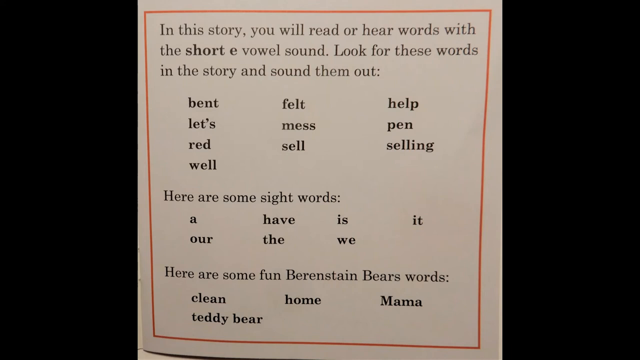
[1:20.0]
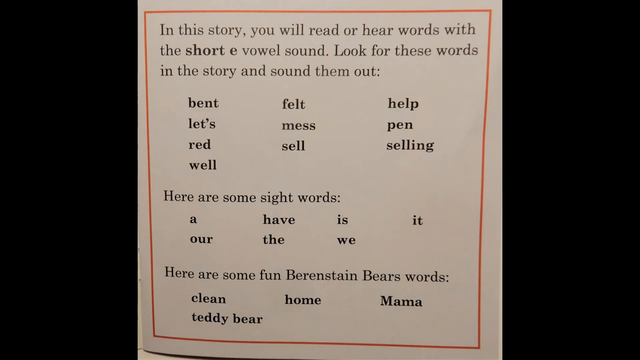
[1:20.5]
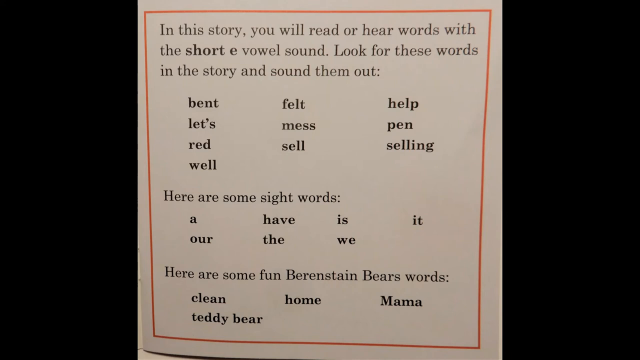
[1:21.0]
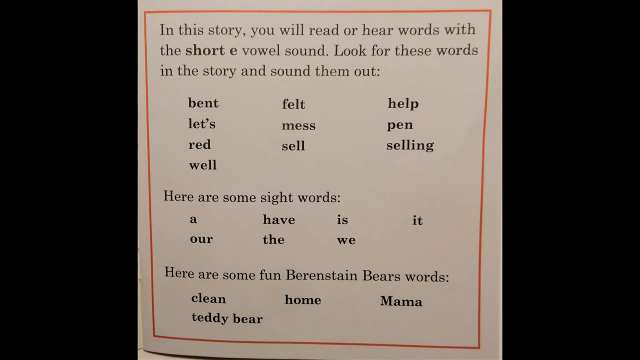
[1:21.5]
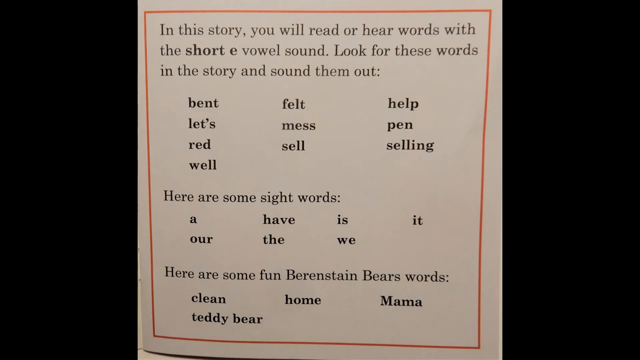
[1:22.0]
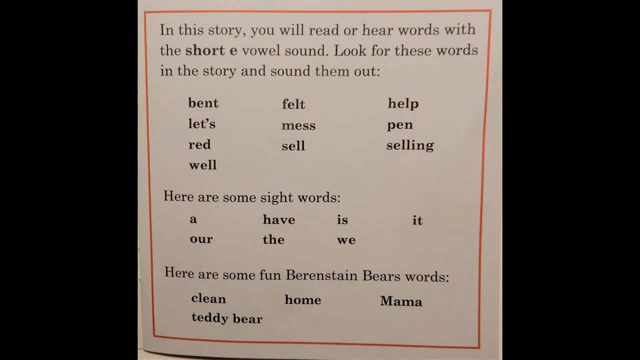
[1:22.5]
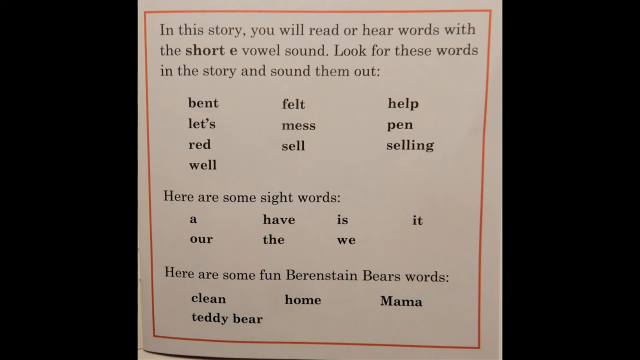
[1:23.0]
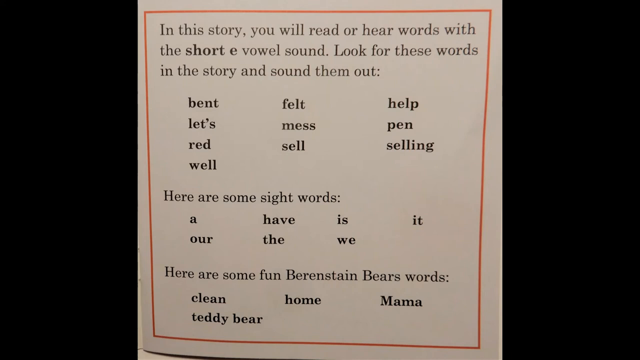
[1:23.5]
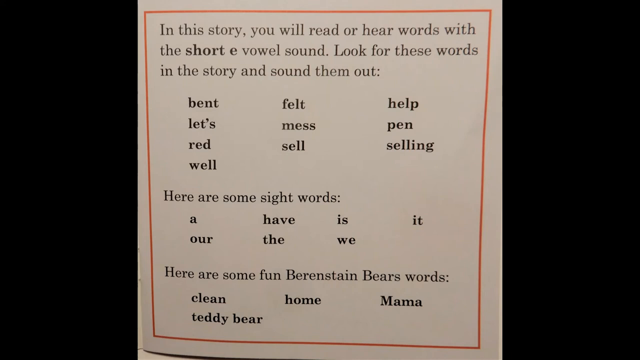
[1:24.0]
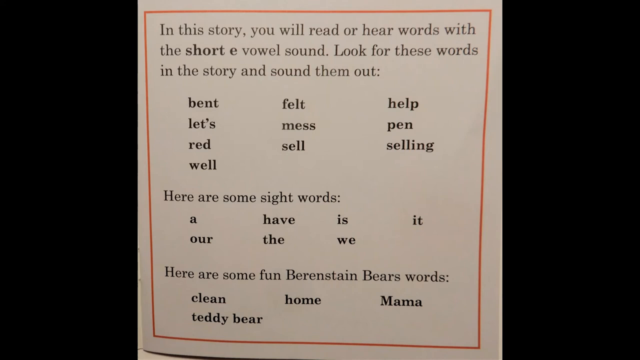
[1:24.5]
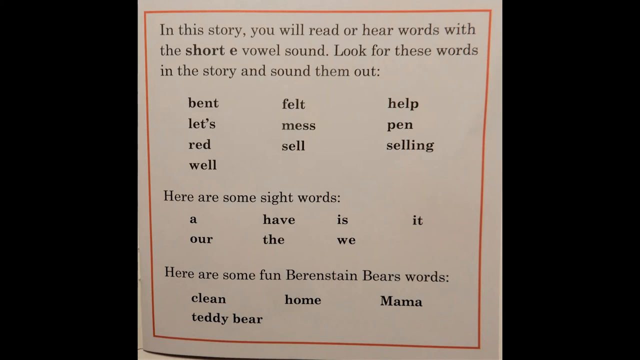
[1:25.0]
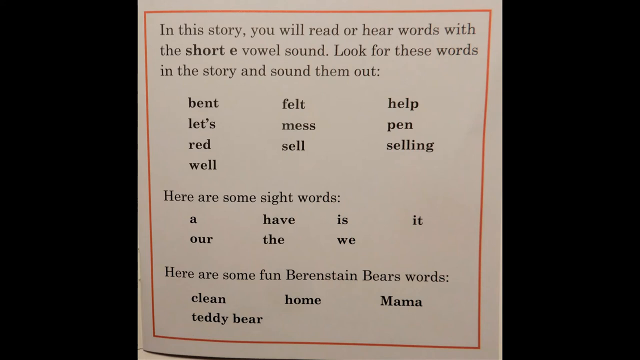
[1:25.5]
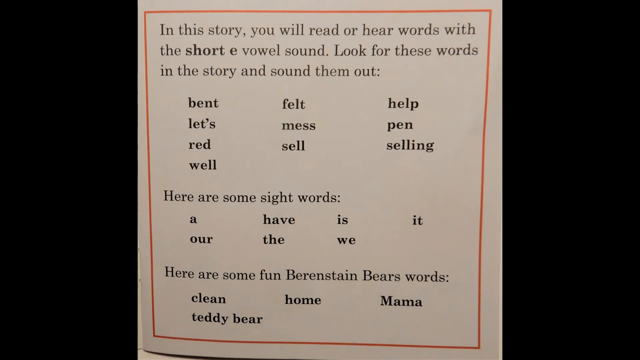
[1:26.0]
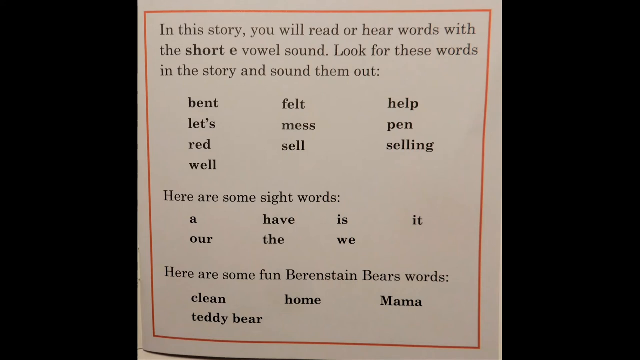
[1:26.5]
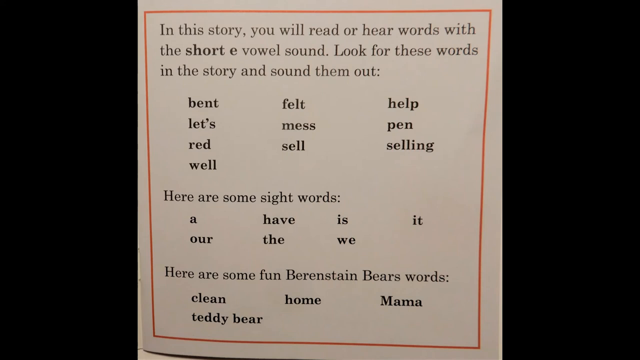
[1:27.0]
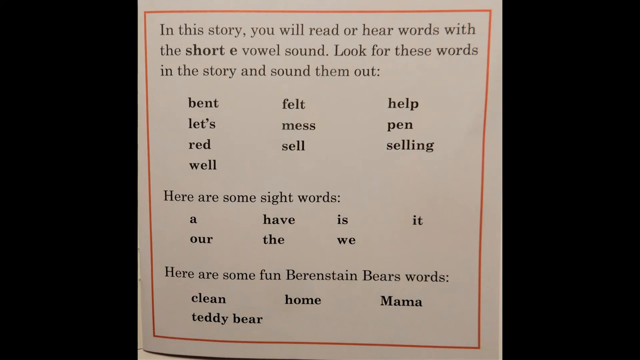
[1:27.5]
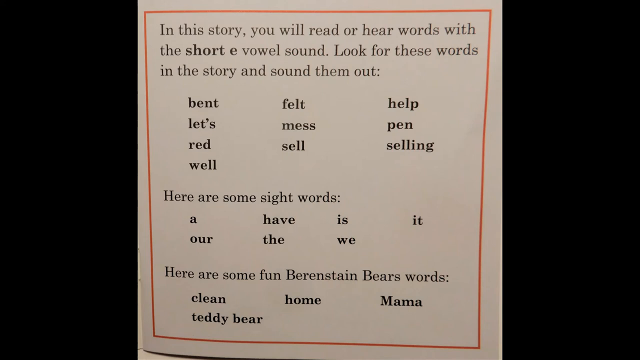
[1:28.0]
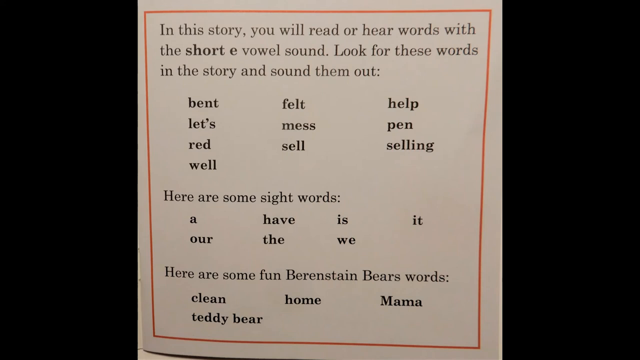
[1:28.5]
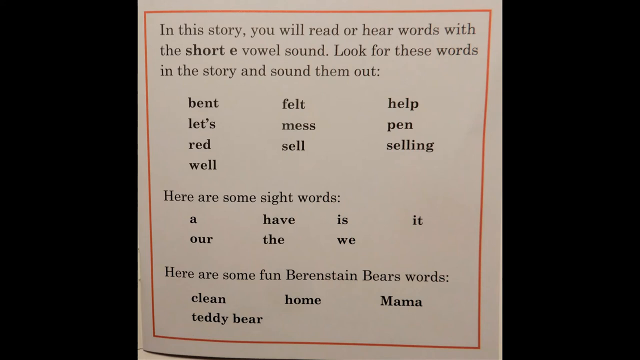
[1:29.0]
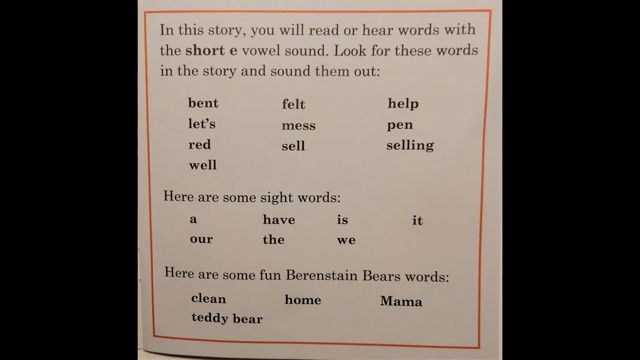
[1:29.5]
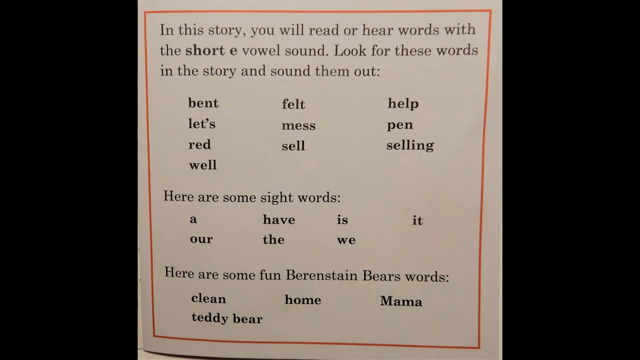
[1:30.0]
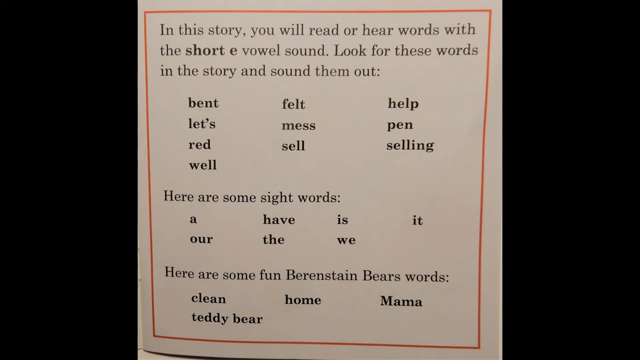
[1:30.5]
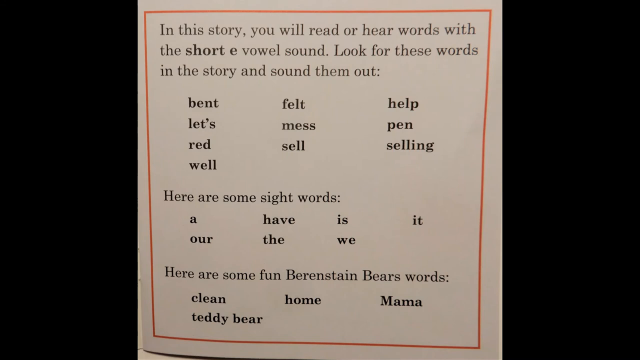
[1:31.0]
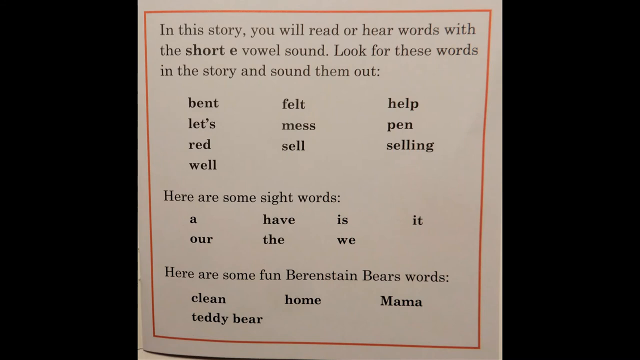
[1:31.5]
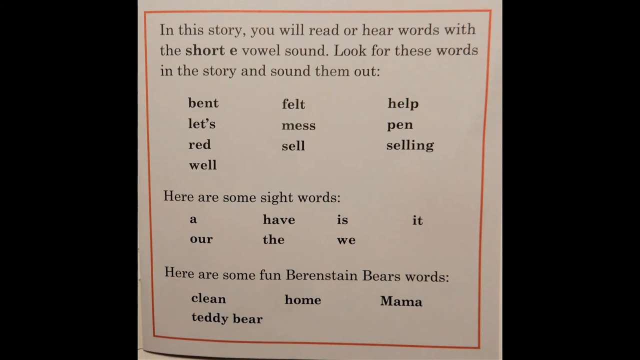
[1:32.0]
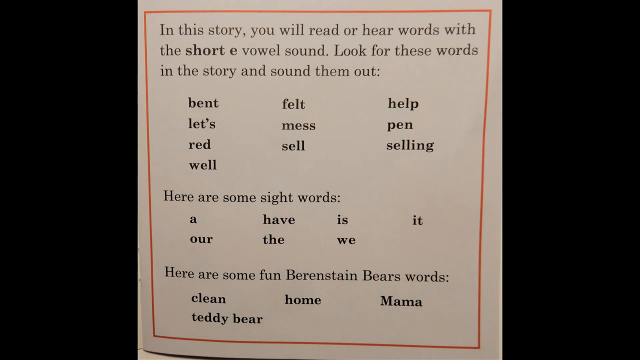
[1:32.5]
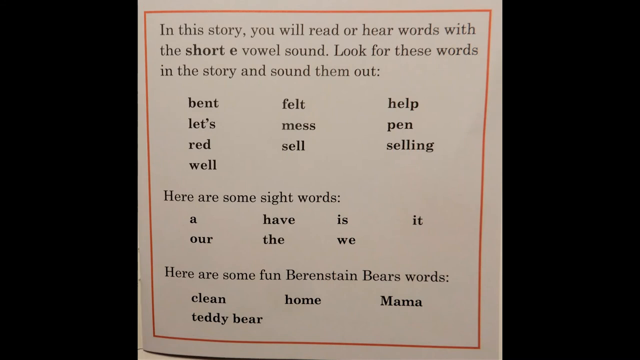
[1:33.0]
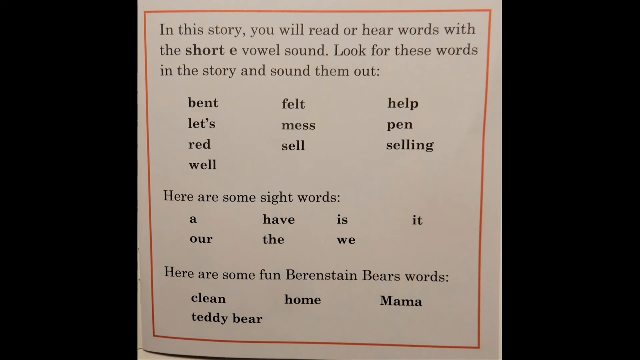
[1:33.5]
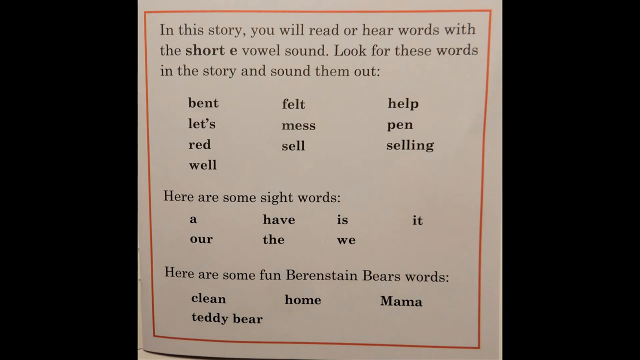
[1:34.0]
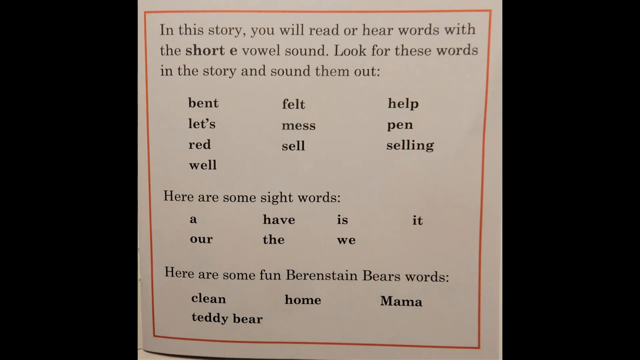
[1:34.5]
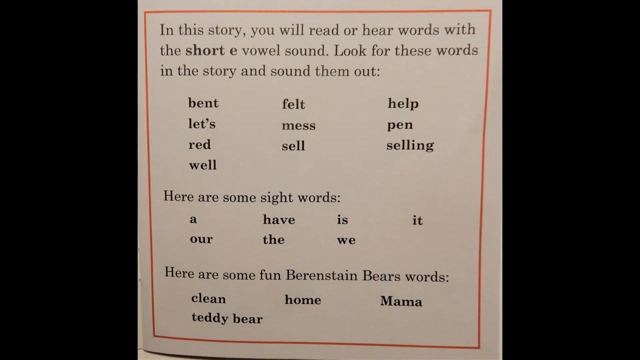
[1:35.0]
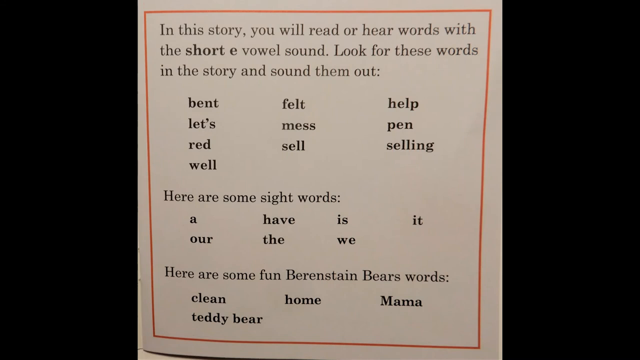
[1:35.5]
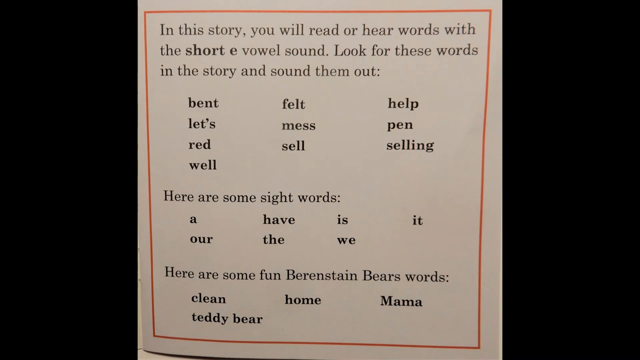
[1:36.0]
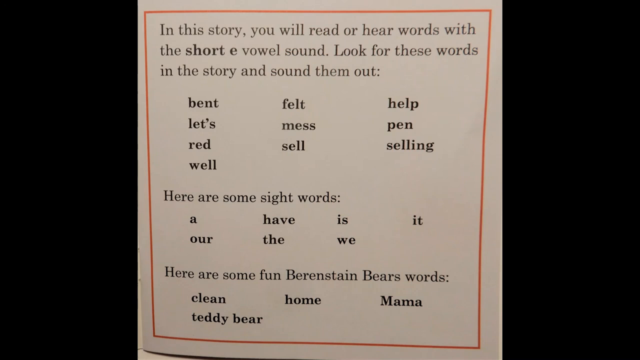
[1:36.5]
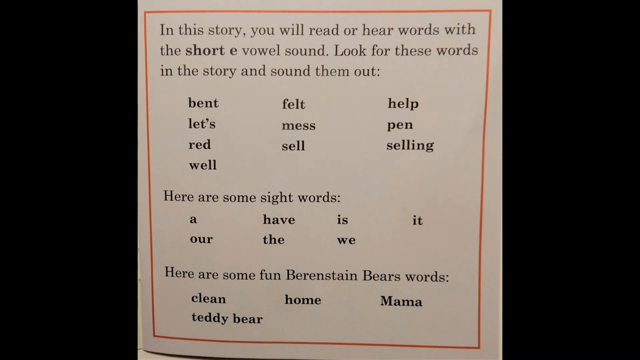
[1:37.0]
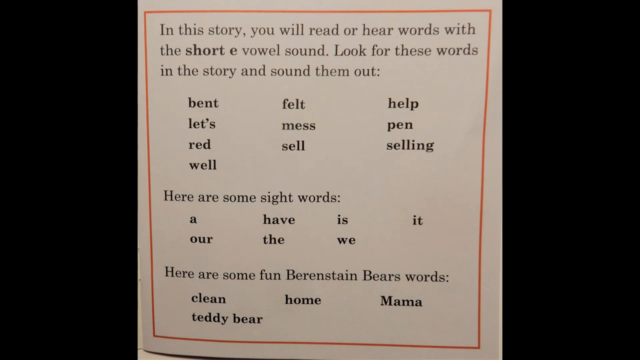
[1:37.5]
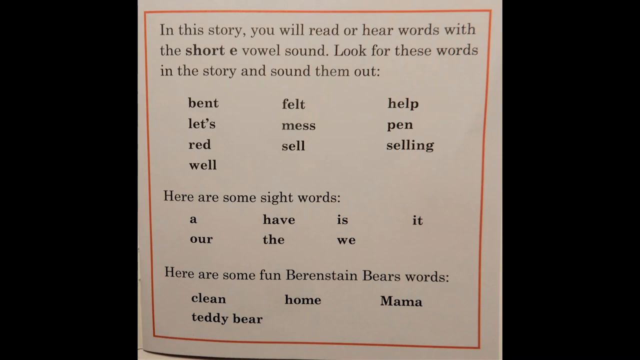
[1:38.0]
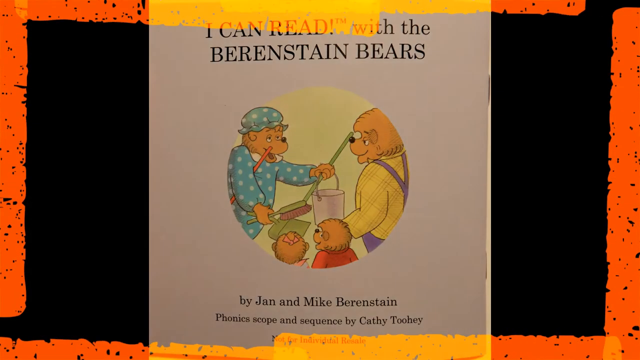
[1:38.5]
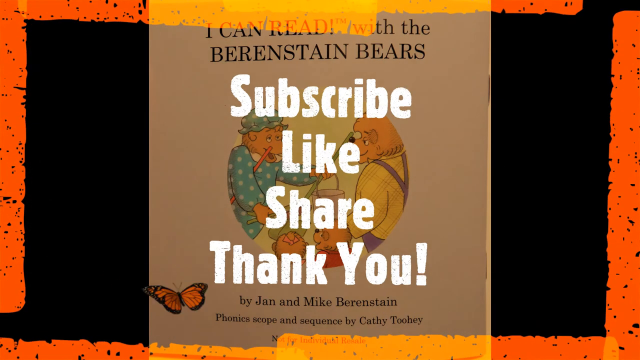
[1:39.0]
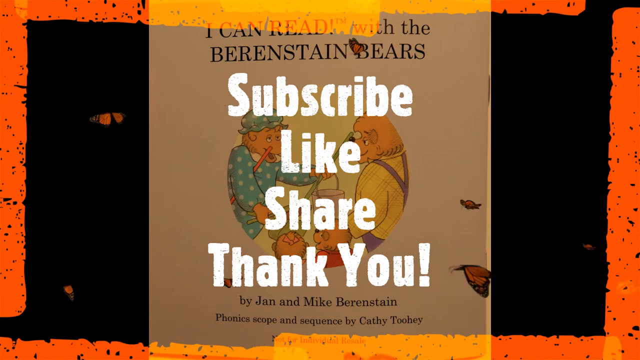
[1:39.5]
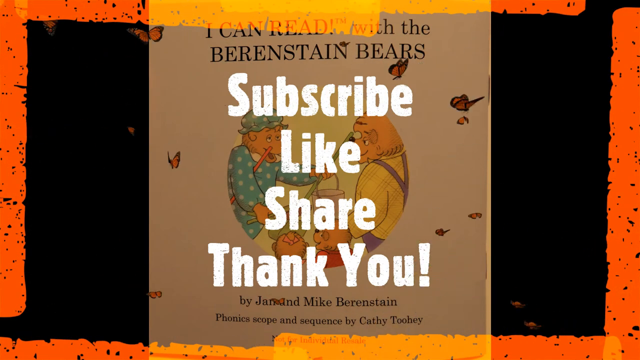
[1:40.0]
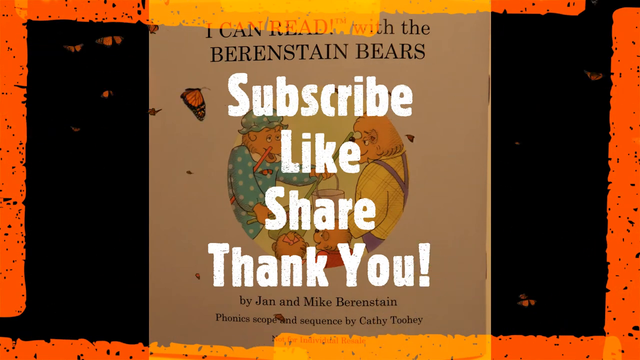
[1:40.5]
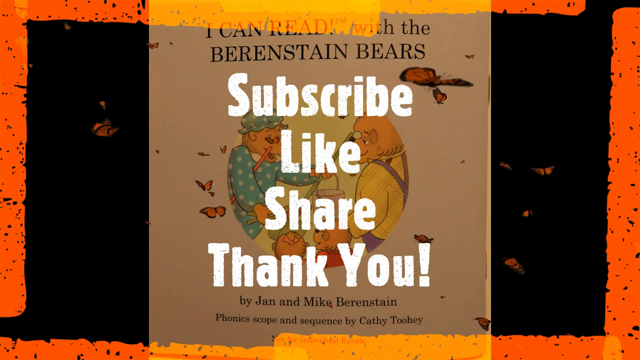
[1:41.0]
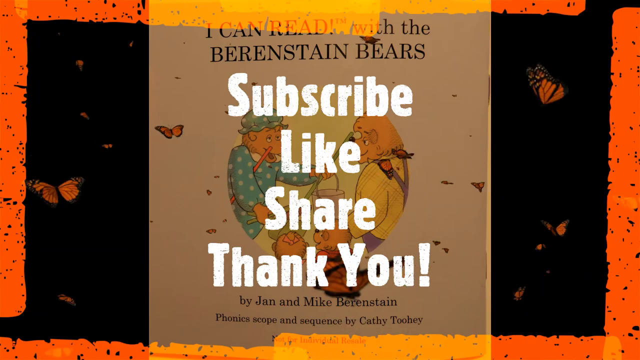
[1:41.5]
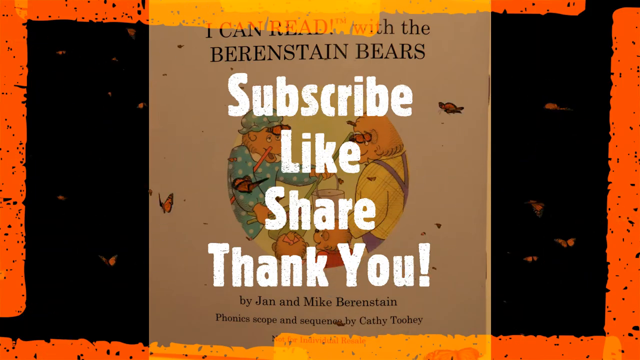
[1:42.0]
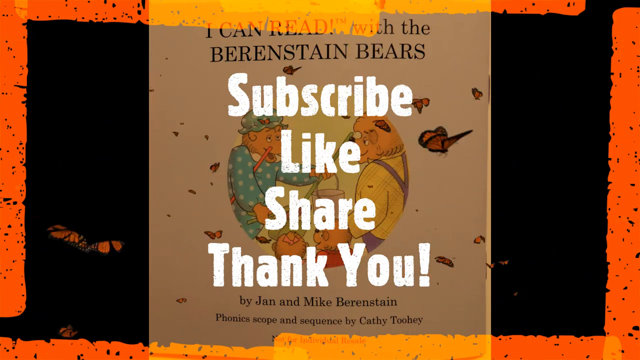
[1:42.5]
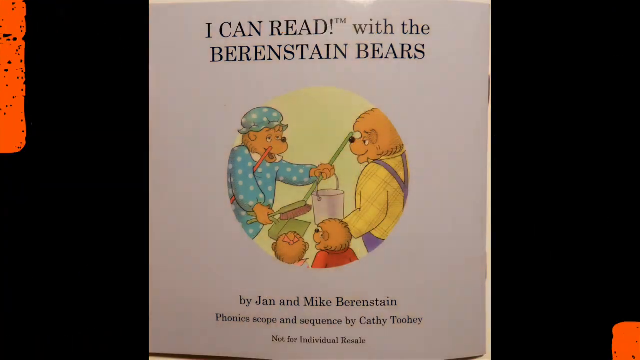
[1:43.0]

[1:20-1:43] The screen with the words to look out for remains. The words with the short e vowel sound are "bent," "felt," "help," "let's," "mess," "pen," "read," "sell," "selling," and "well." The sight words are "a," "have," "is," "it," "our," "the," "we." The fun Berenstain Bears words are "clean," "home," "mama," and "teddy bear." The view then fades to another cover of the Berenstain Bears book, which at the back says "I can read with the Berenstain Bears." In the middle is an image in a circle showing the whole family with a broom, a pan and a bucket, all looking toward each other. Outside the circle the cover is gray, and the authors' names are at the bottom. Then text reading "subscribe," "like," "share," and "thank you" pops up in the middle of the screen along with an orange border that looks kind of grungy, and orange and black butterflies fly over the screen. This then disappears.